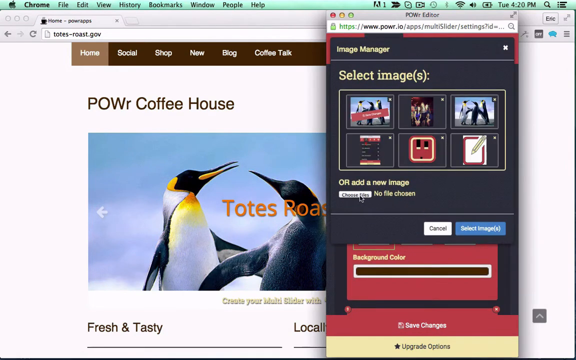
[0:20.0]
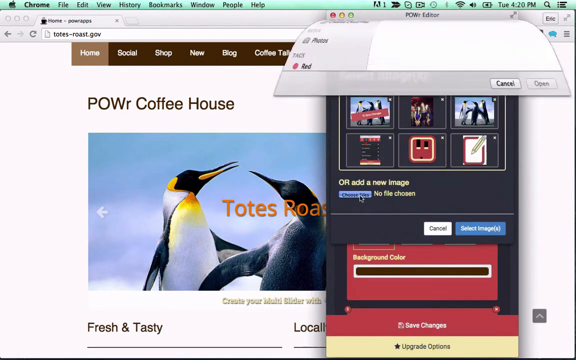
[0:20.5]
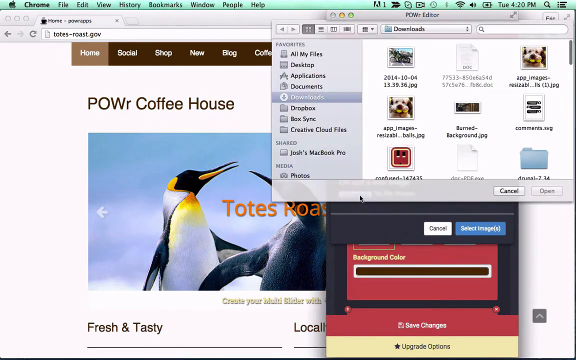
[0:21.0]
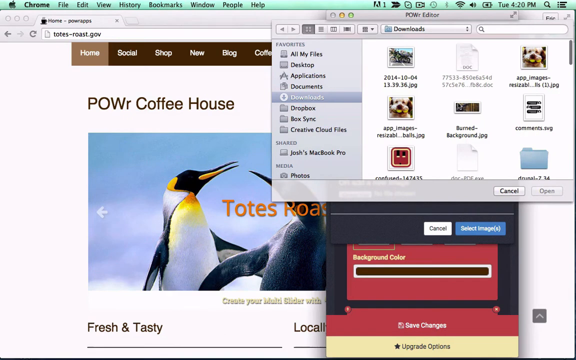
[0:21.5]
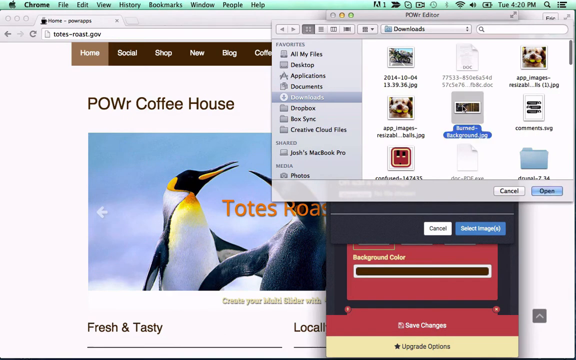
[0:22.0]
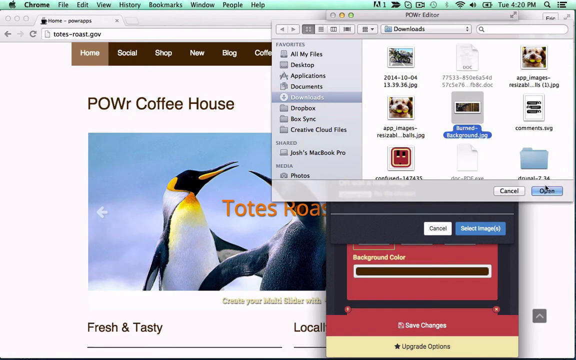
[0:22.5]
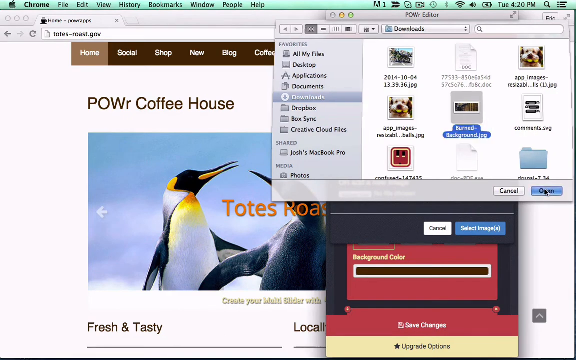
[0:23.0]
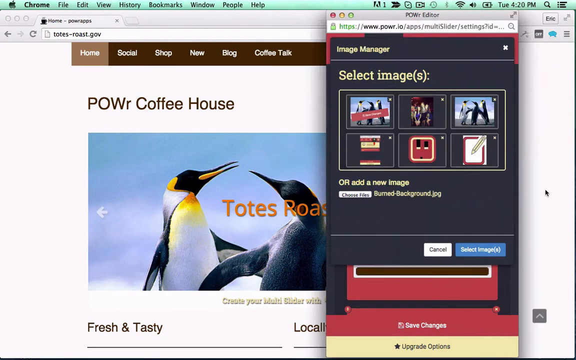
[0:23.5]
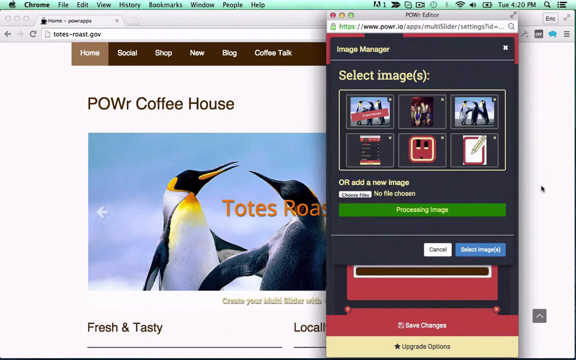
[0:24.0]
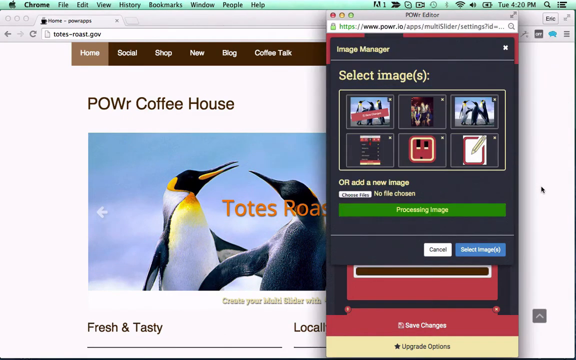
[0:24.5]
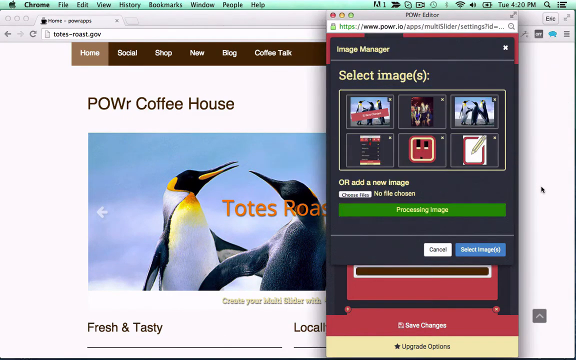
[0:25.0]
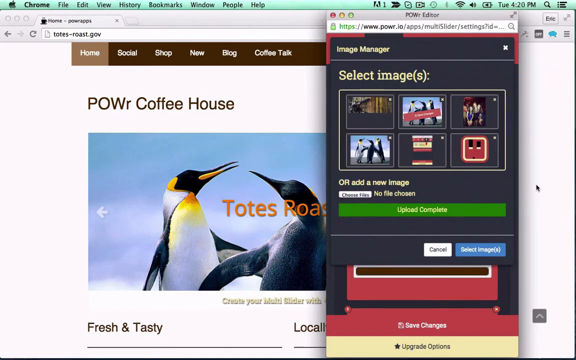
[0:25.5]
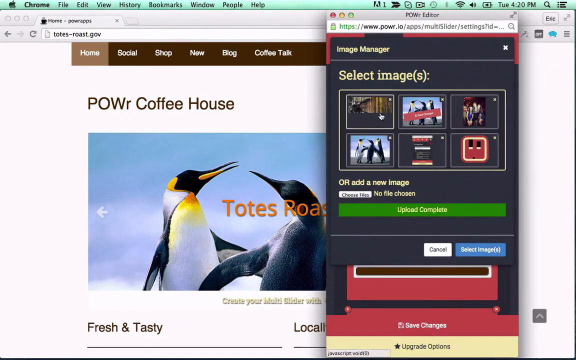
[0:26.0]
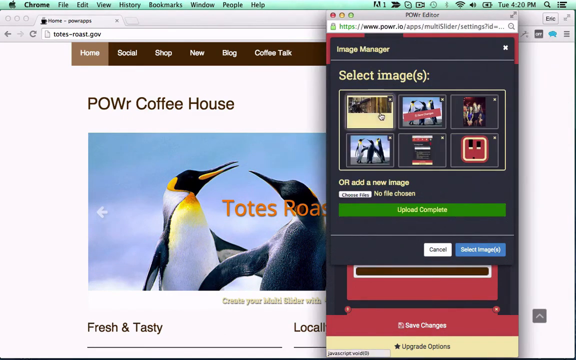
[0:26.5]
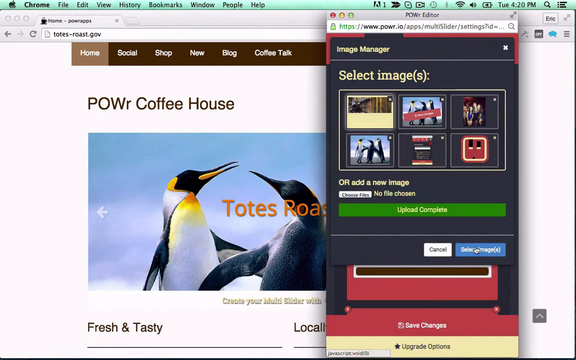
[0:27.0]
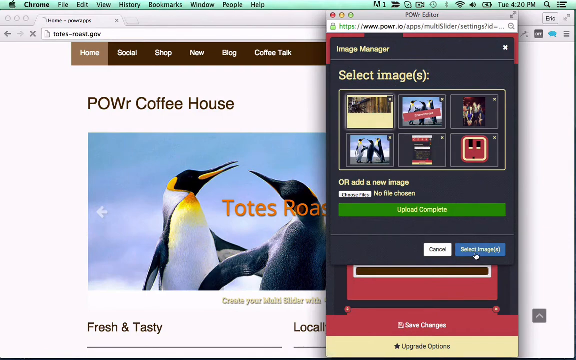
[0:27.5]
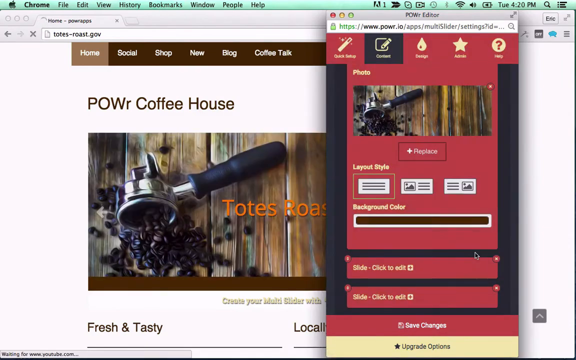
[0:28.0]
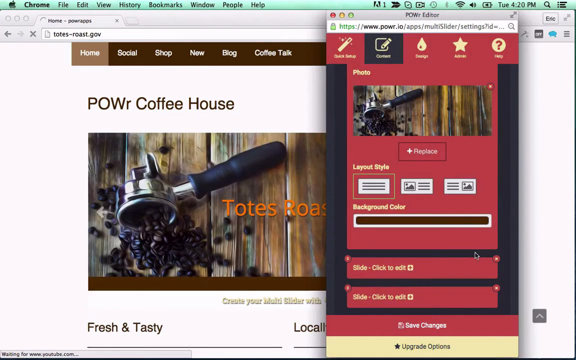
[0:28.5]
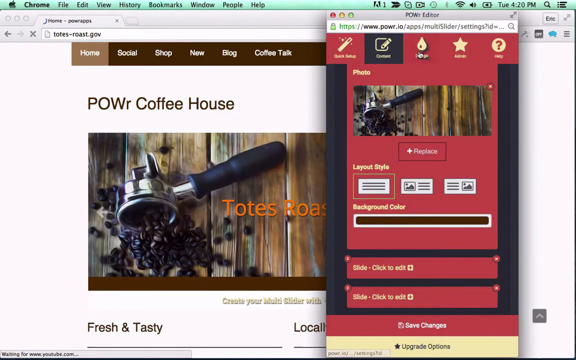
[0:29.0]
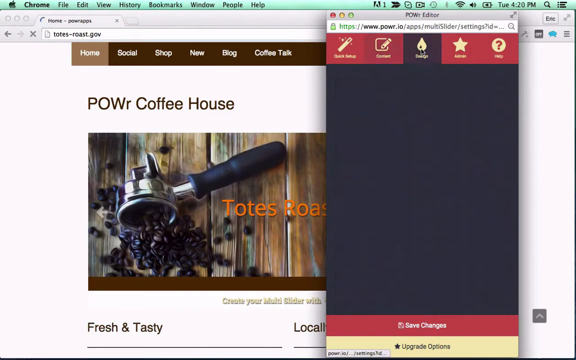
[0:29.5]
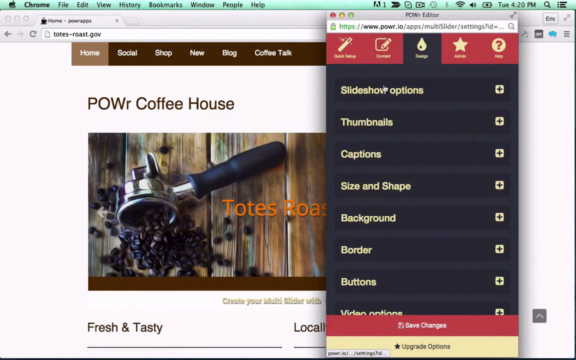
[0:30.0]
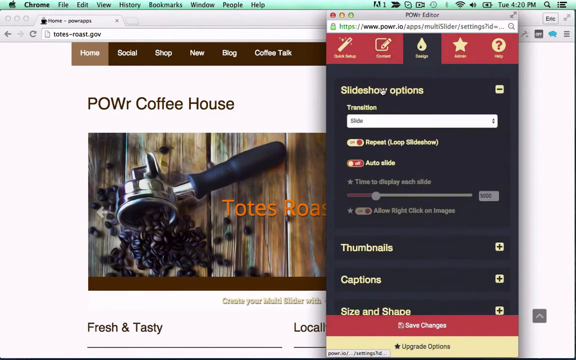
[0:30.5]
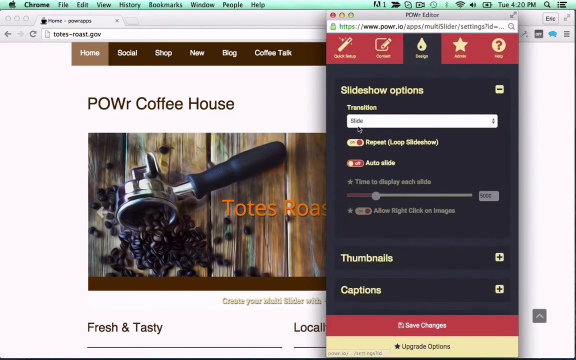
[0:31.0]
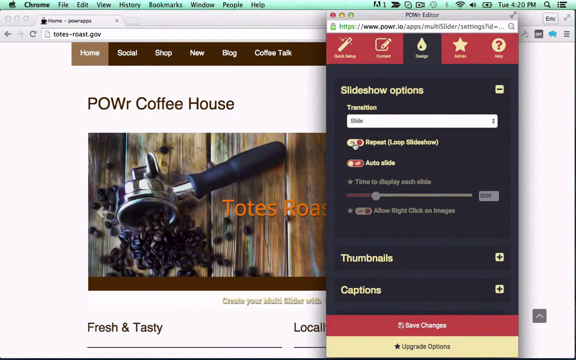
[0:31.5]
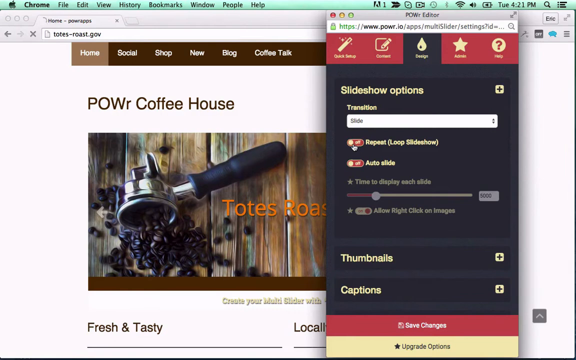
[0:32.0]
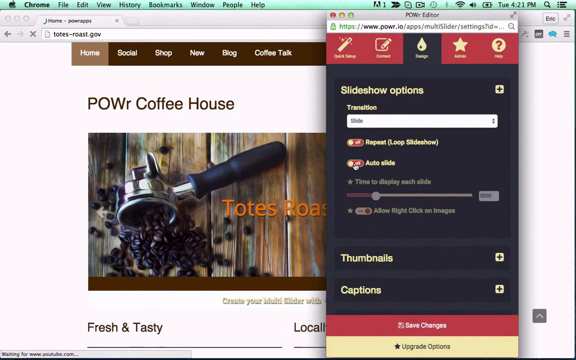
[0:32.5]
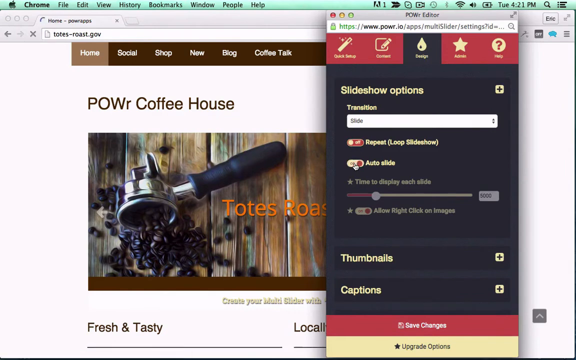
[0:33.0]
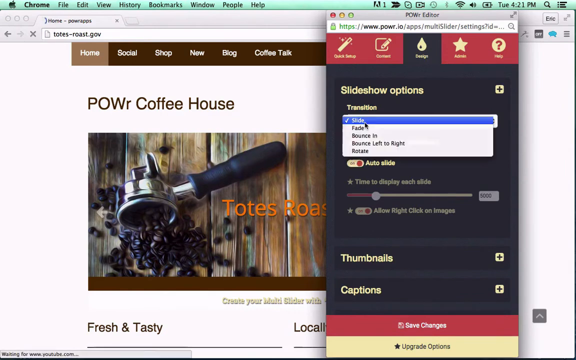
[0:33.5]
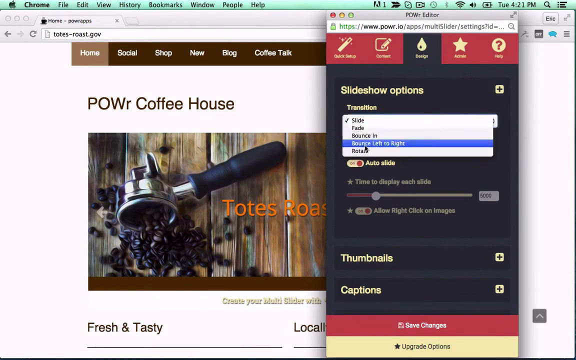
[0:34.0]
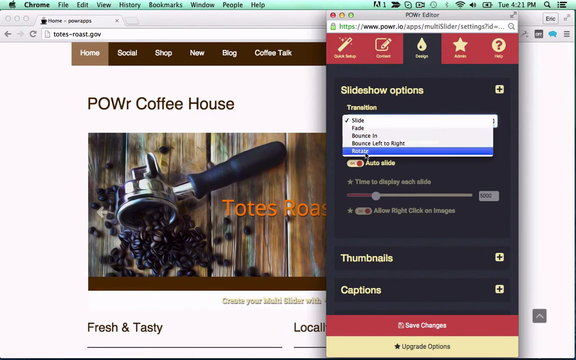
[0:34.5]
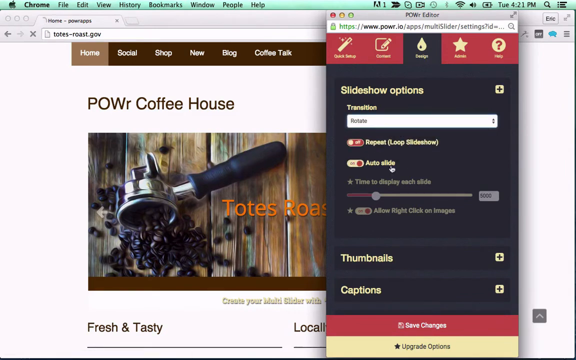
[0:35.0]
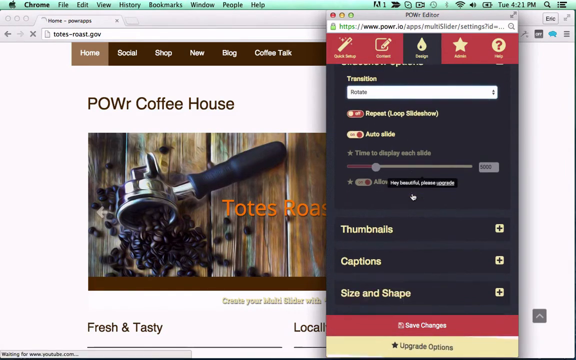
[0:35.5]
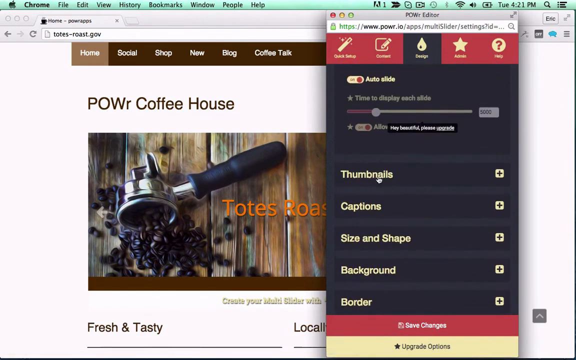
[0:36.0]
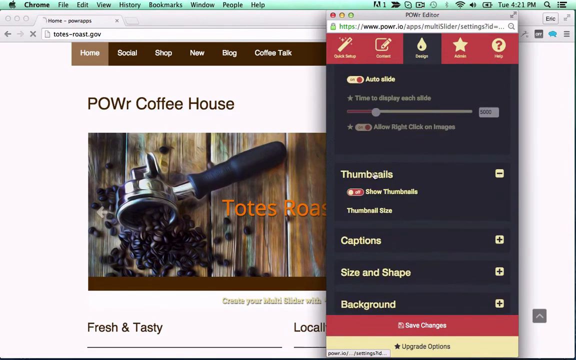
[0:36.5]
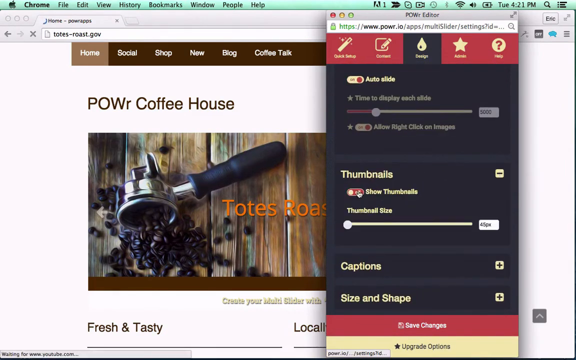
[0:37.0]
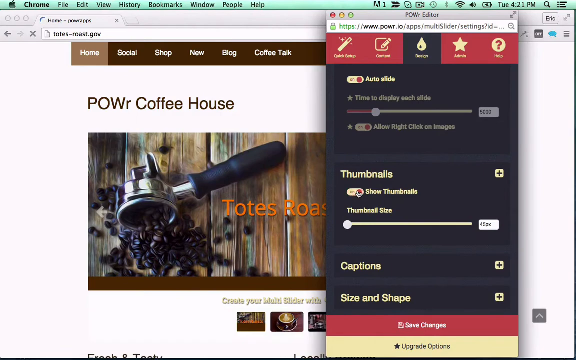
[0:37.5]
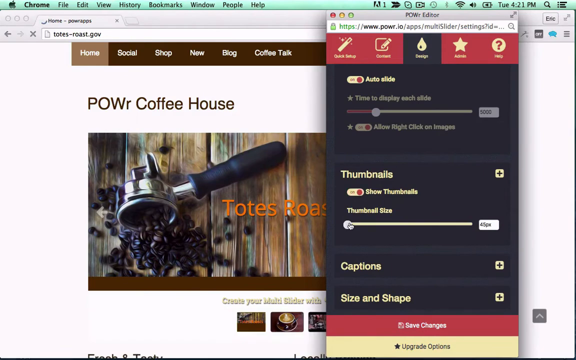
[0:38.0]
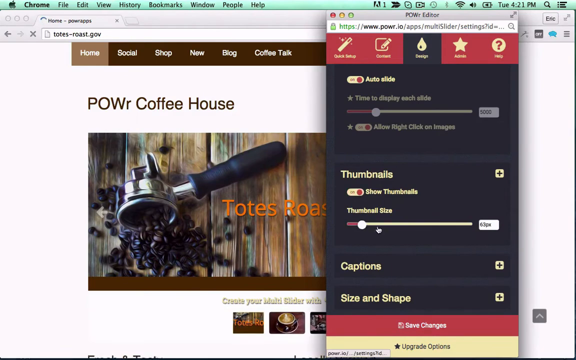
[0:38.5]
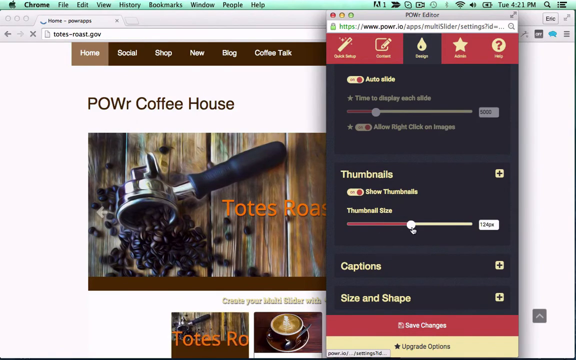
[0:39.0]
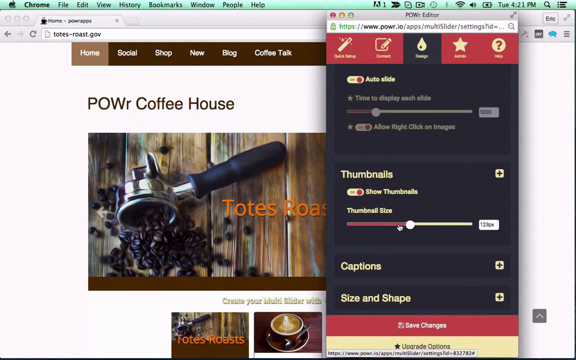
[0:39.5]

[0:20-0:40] Someone is changing the words on a computer page that shows some penguins, demonstrating how to do it. They select the image of the penguins and then change the words by typing what they want into a box. Another pop-up box comes up showing their downloads, with a file that looks like it is named "background.jpg", which they apparently click on and highlight. Next, "upload complete" appears in a green box right in the middle of the screen, directly above a cancel button and a select images button. Another pop-up then appears reading "slideshow options", and they click on different areas and move sliders to adjust the time for the options they are selecting.